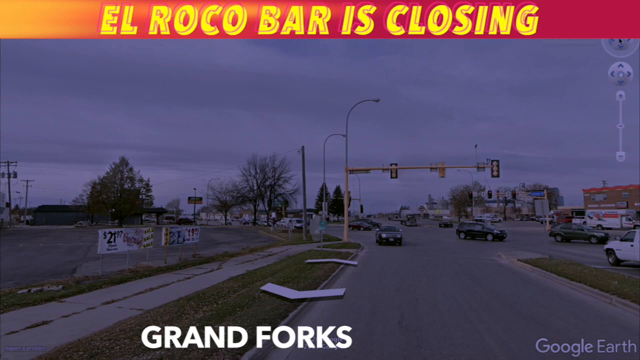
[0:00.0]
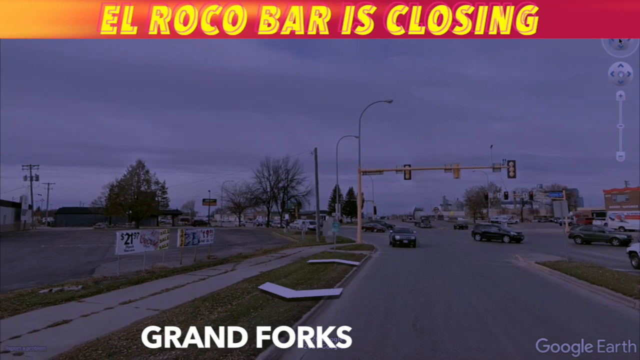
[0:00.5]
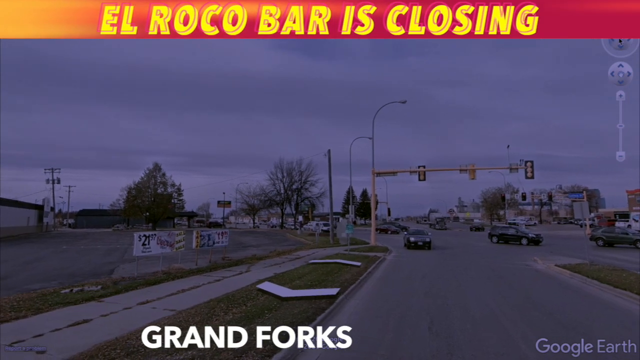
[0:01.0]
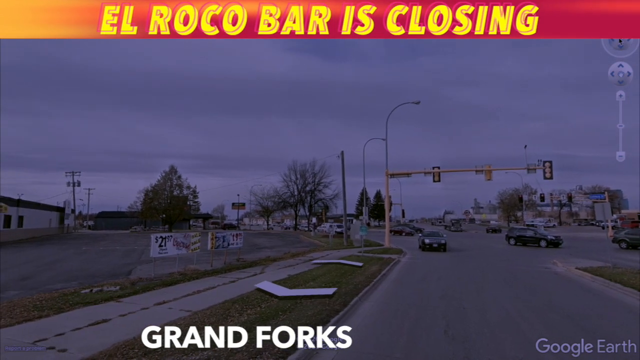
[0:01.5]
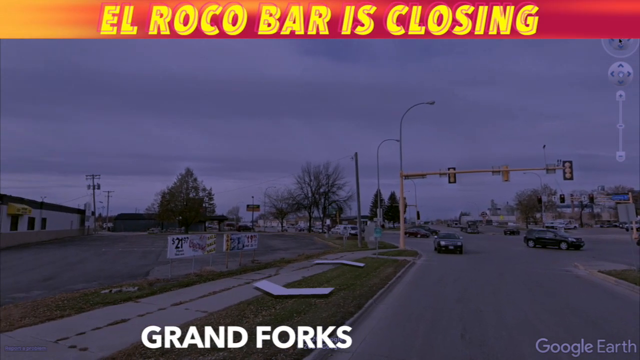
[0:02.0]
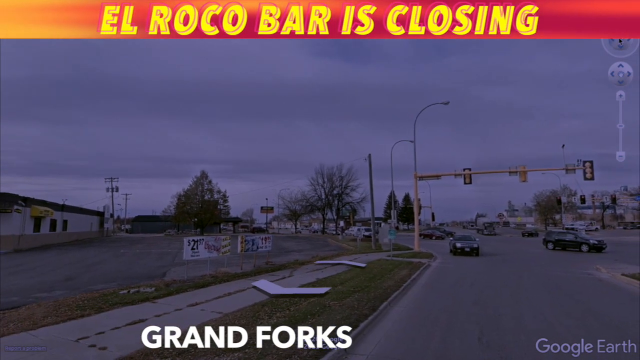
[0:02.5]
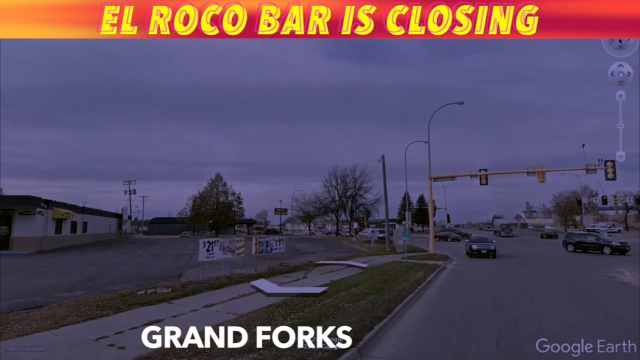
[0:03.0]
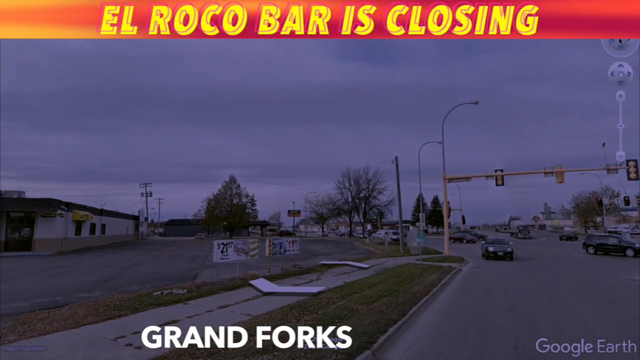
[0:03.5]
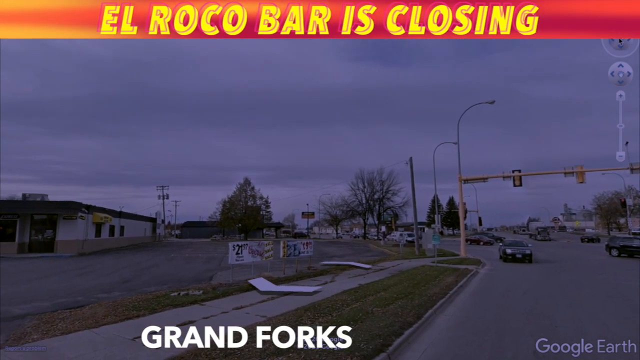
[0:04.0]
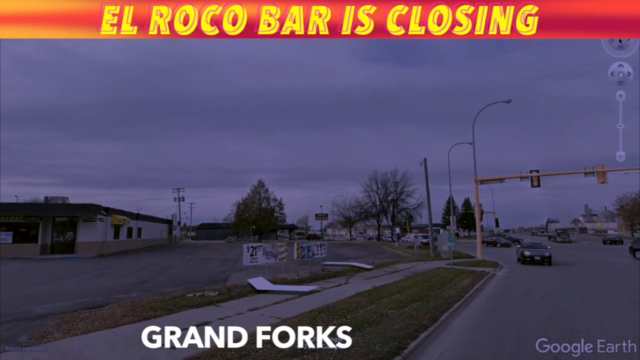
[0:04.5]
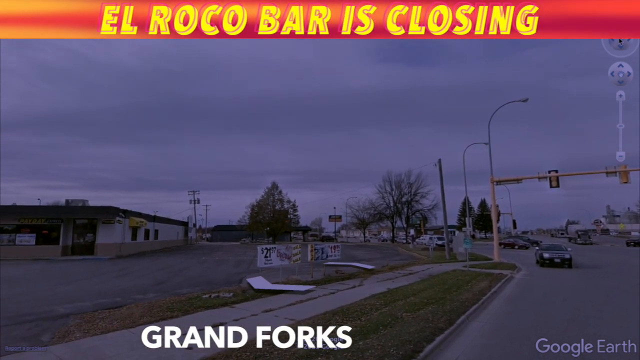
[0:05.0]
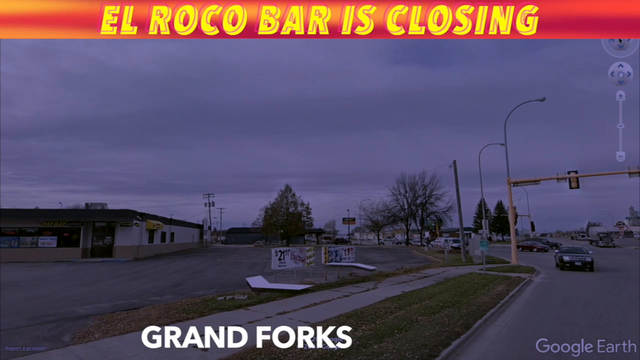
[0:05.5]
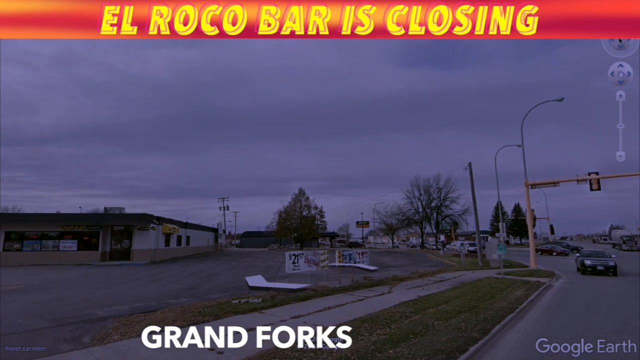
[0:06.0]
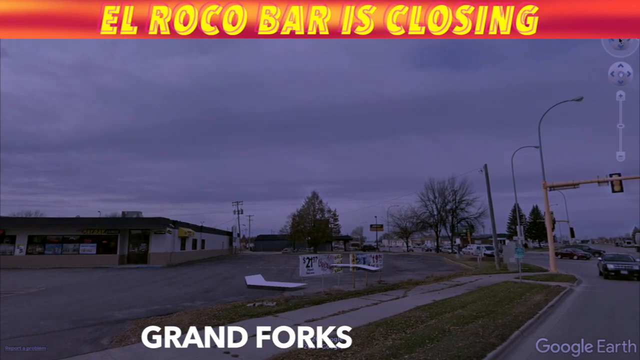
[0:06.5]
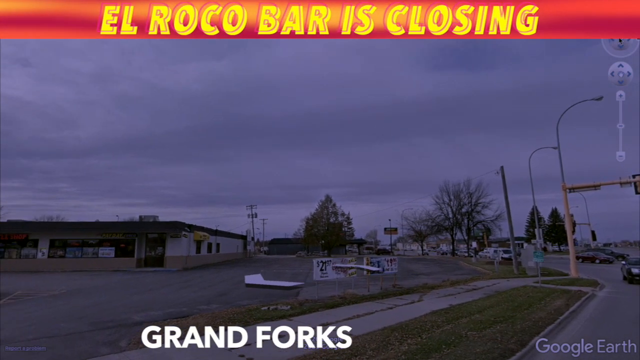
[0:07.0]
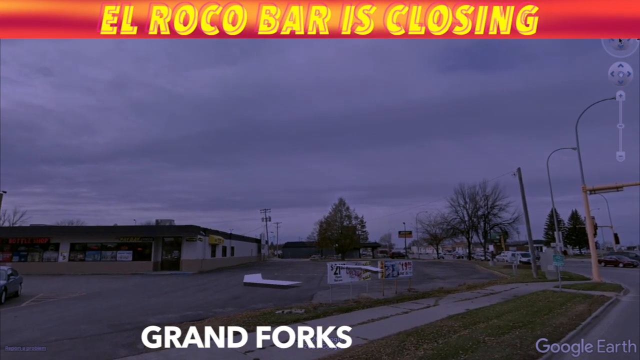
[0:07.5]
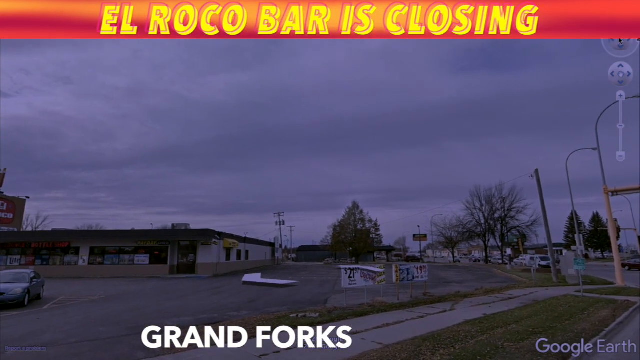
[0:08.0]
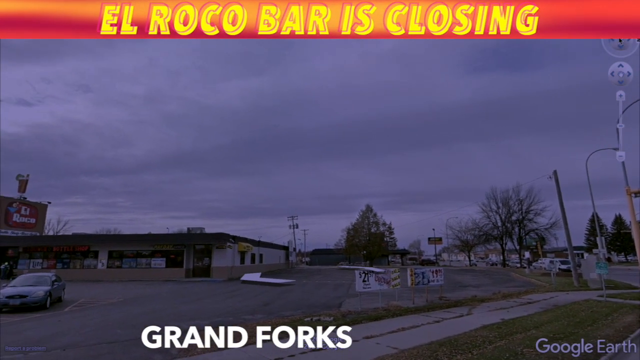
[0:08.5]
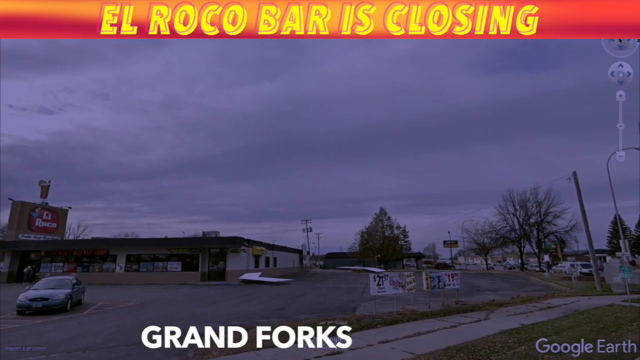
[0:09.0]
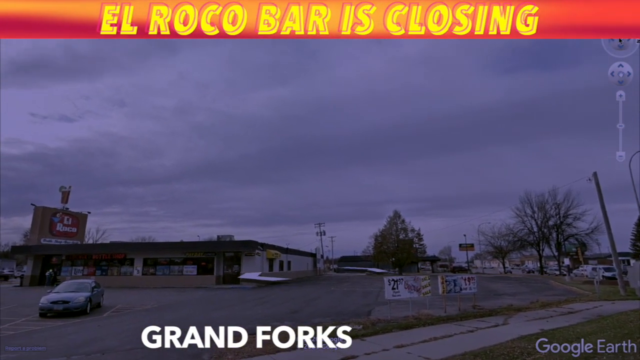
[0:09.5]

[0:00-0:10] A Google Earth view shows a town or road in Grand Forks, with on-screen text reading "El Rocco bar is closing." The view appears to be looking at a restaurant. Many cars are on the street, though the image coverage is not very clear. It looks like daytime, and street lights, other small stores and buildings are visible.